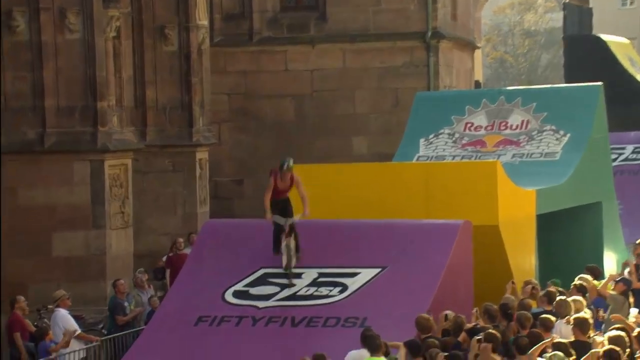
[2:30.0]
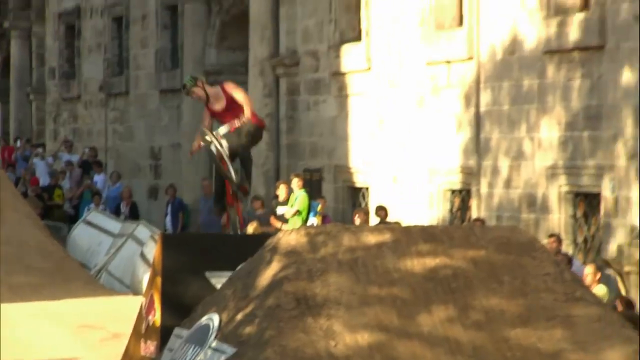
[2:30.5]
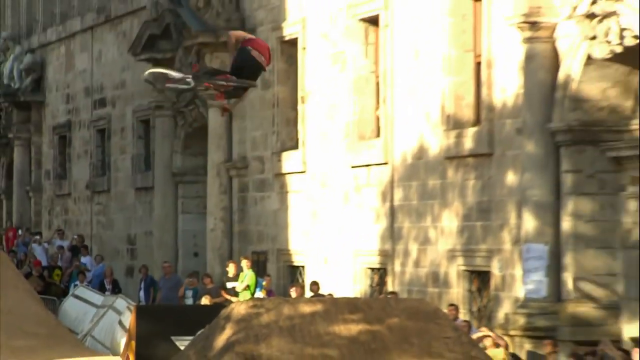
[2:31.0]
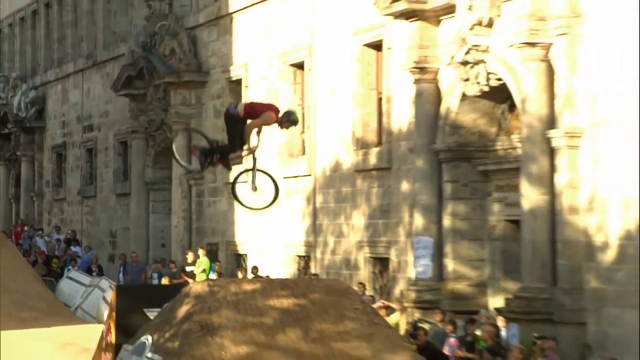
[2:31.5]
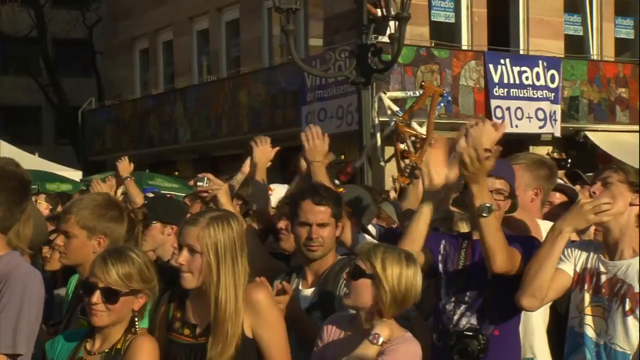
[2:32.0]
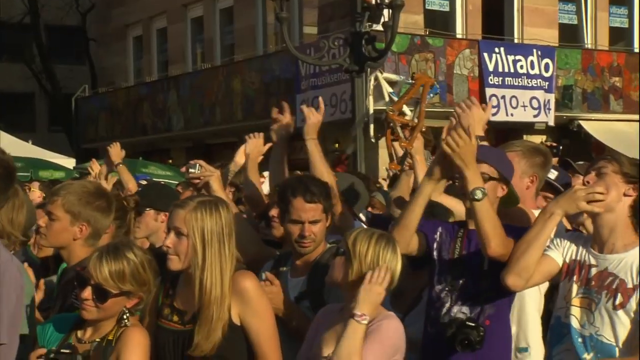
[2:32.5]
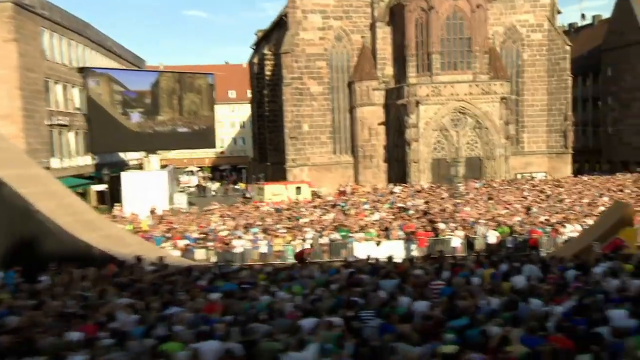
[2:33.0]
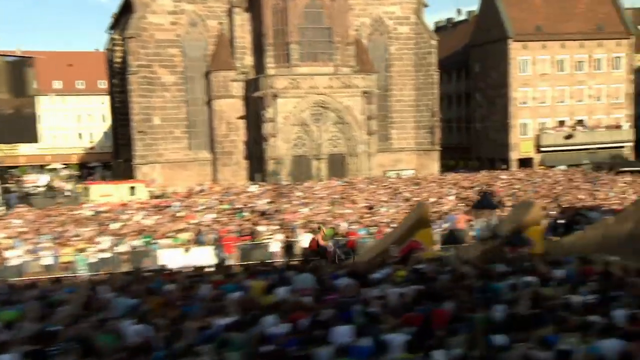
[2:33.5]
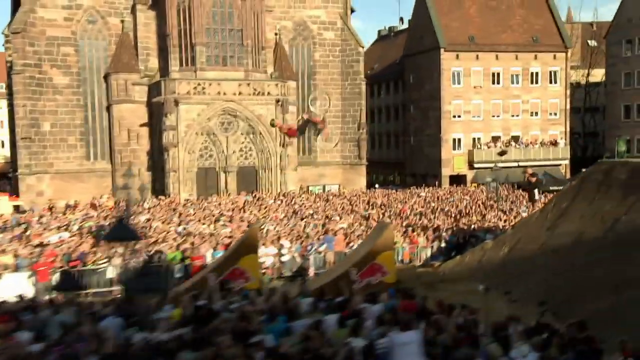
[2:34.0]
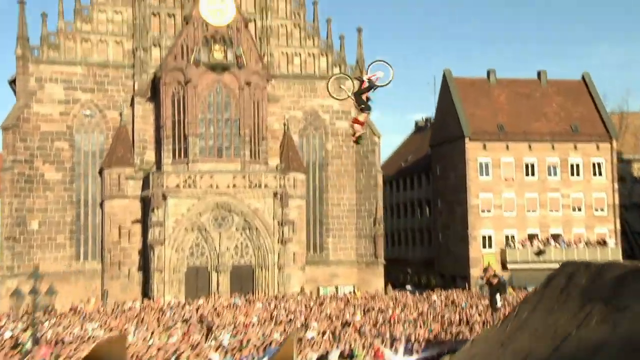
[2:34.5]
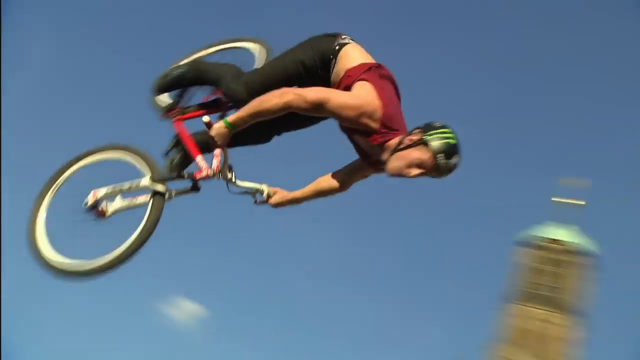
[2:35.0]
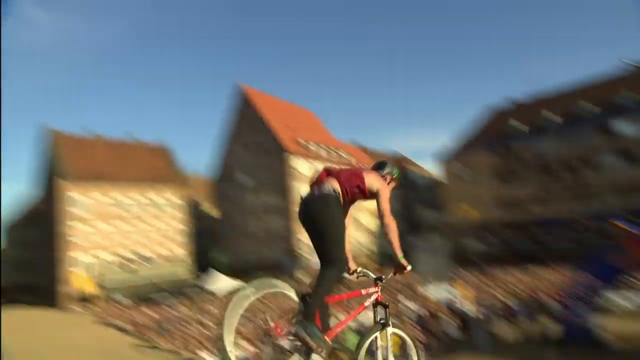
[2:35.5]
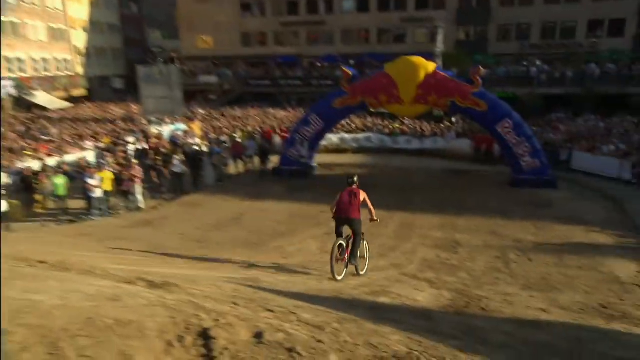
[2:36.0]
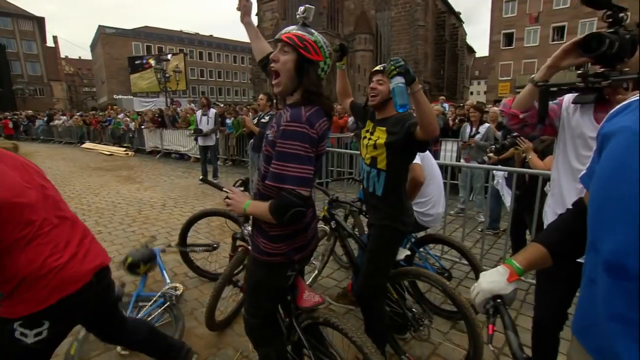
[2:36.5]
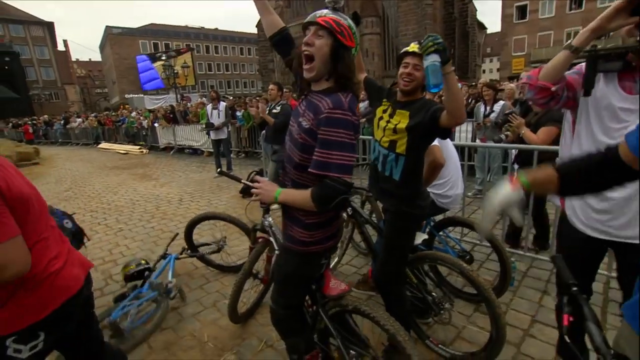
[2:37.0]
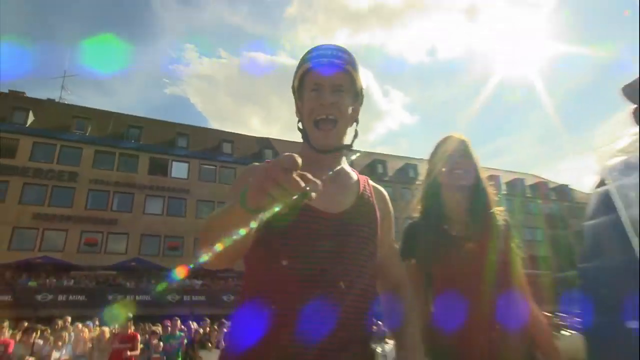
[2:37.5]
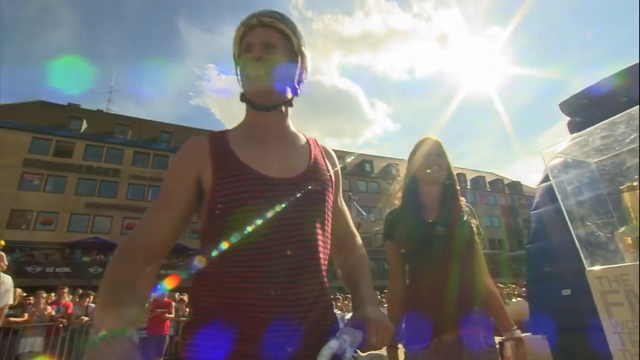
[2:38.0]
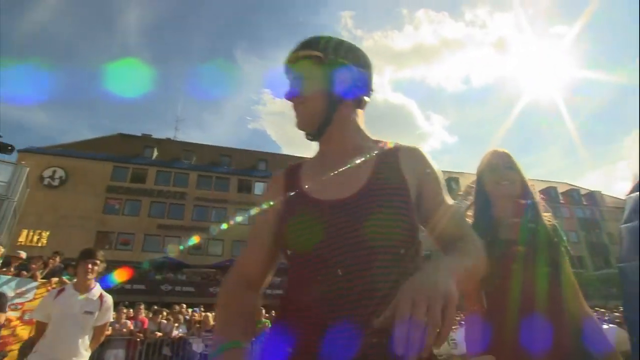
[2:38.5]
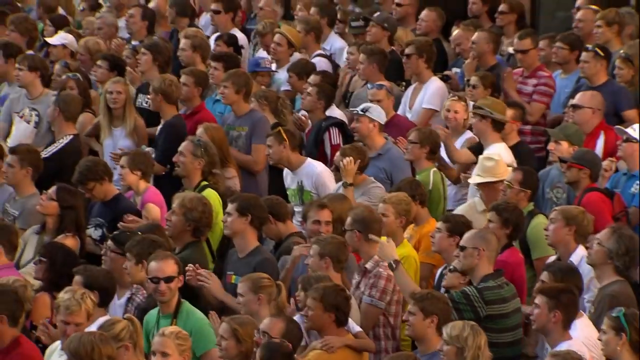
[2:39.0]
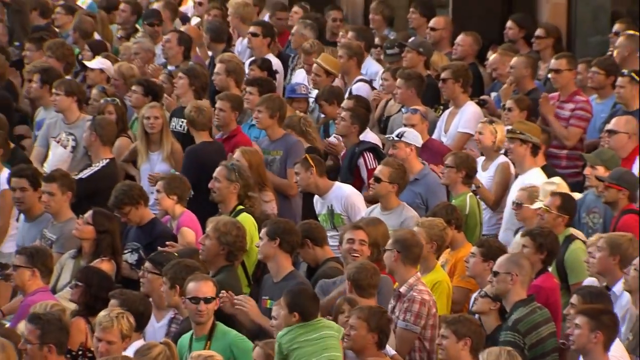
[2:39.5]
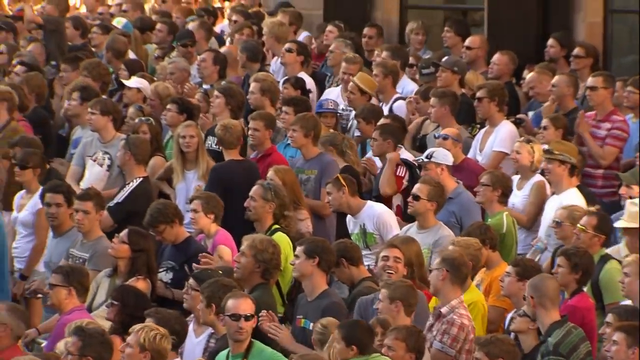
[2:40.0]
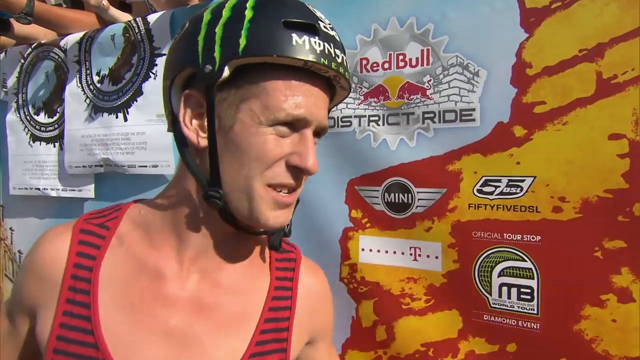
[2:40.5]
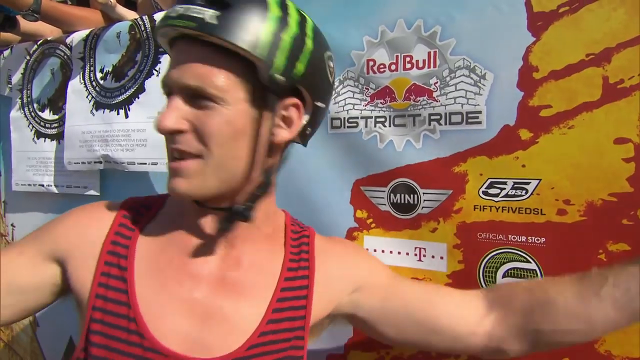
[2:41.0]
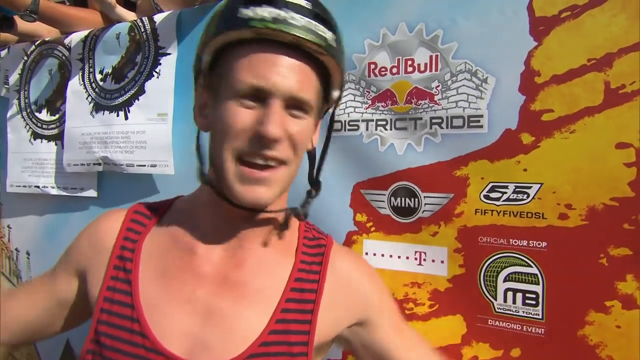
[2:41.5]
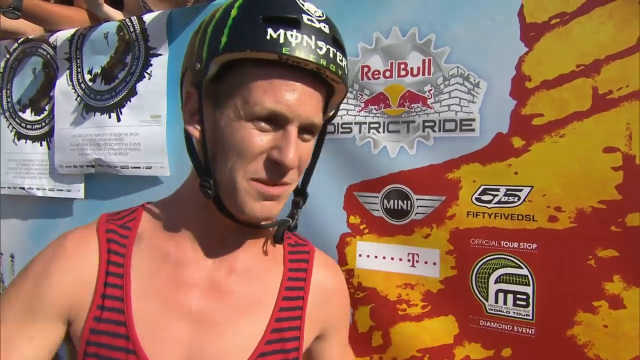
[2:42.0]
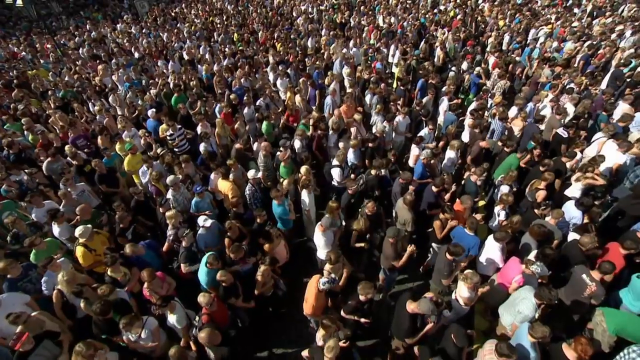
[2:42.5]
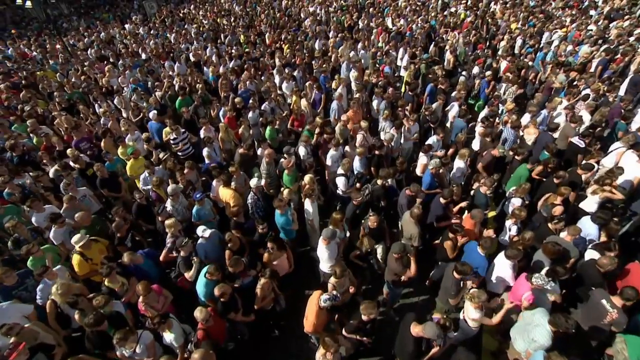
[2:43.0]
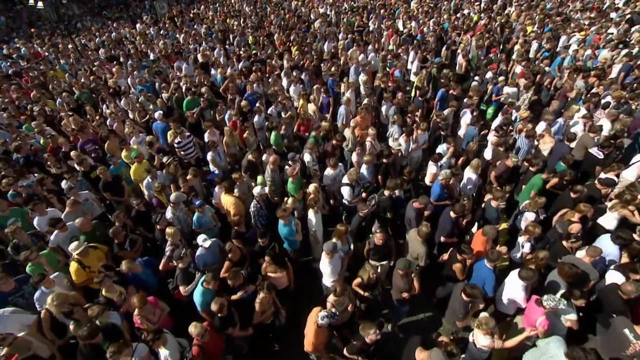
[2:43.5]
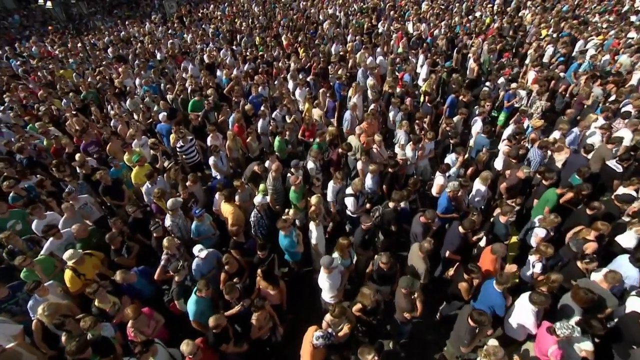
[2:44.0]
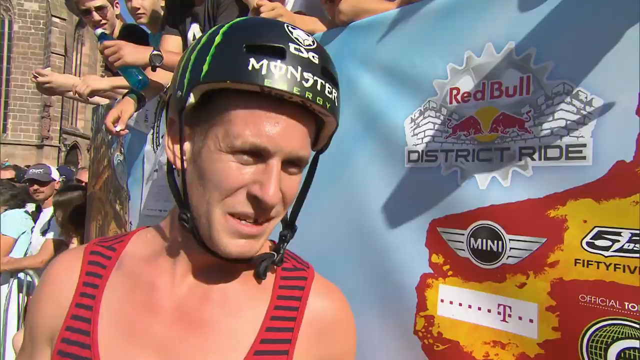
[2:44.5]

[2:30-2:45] A very large crowd outdoors watches extreme bicyclists soar down large ramps, fly through the air doing flips, turns and spins, and land on another ramp heading down into the crowd area. The crowd claps and cheers. At the bottom, some bicyclists cheer on their teammates and friends as they go down the ramps. The bikes look like normal bikes with wide wheels. Each bicyclist's protective gear is mainly just a helmet, with a few maybe wearing elbow pads; most wear jeans and a t-shirt or a tank top.